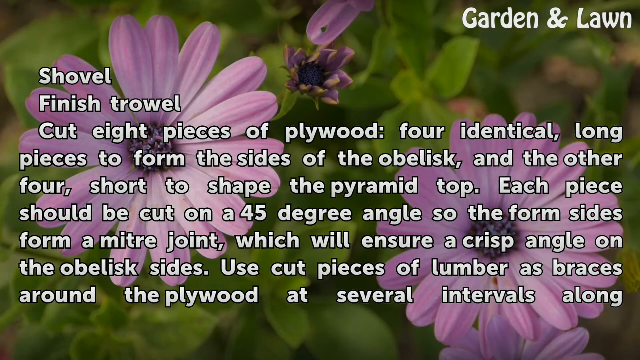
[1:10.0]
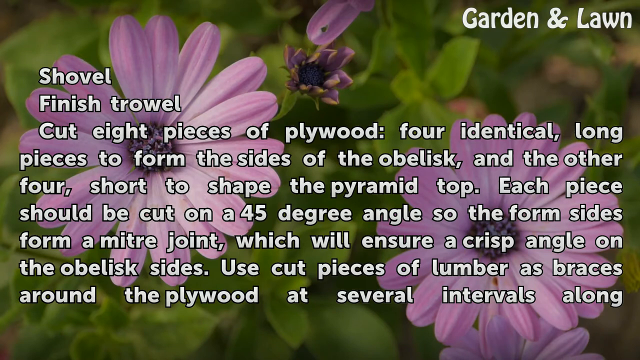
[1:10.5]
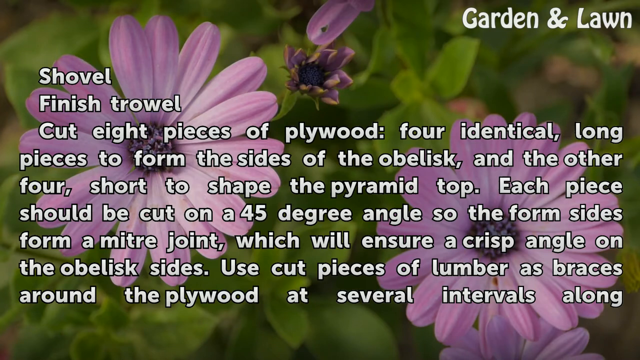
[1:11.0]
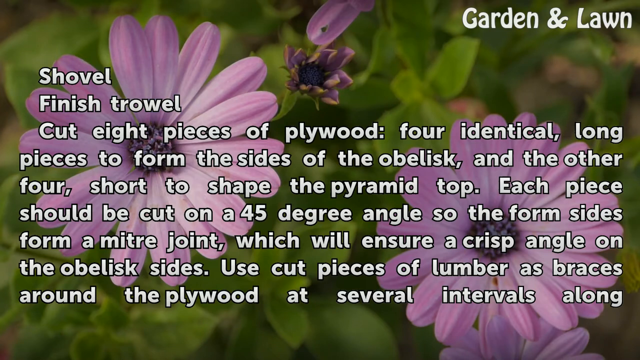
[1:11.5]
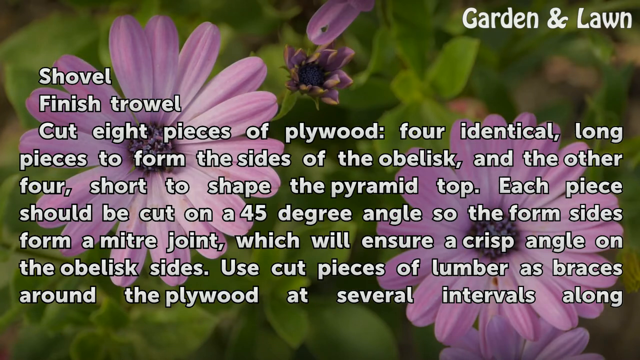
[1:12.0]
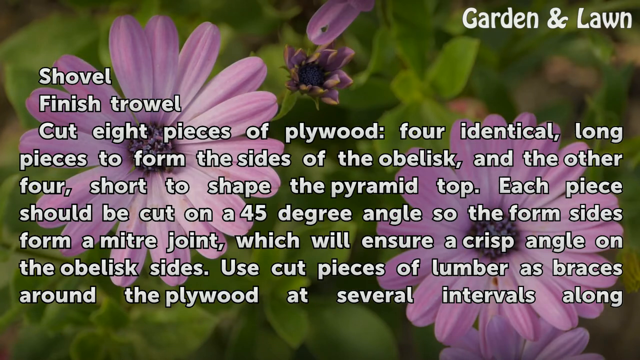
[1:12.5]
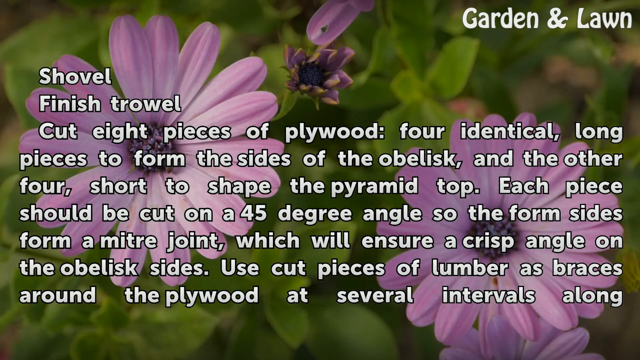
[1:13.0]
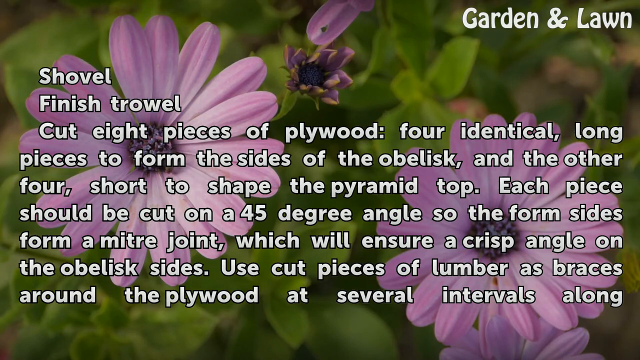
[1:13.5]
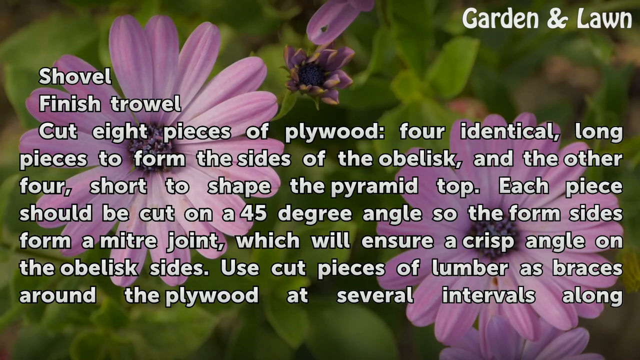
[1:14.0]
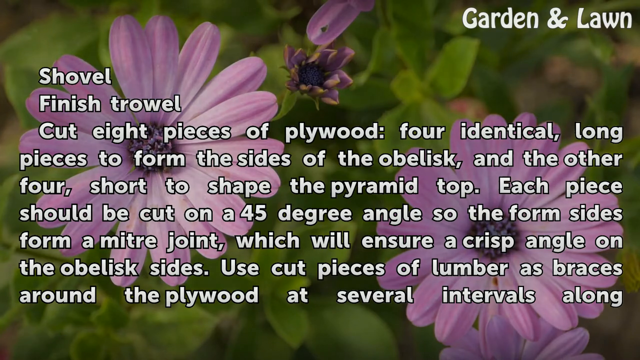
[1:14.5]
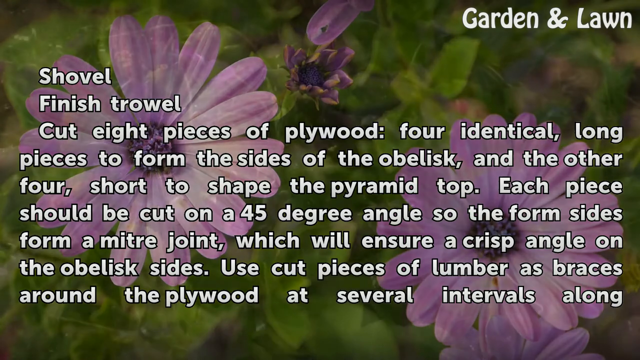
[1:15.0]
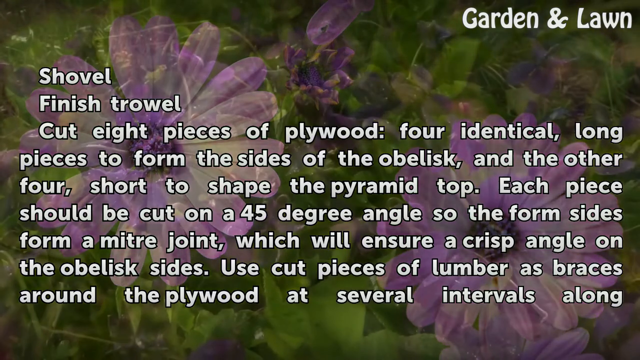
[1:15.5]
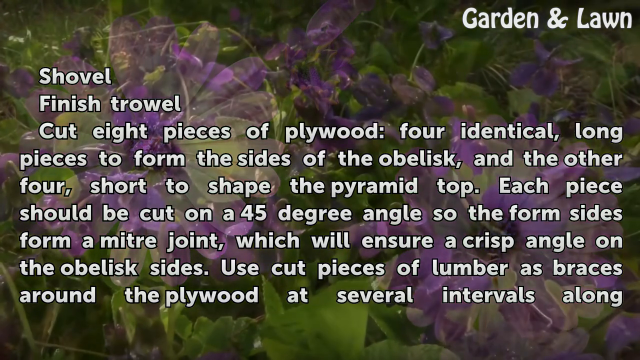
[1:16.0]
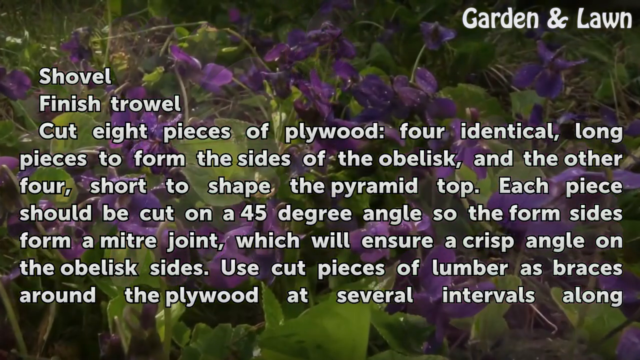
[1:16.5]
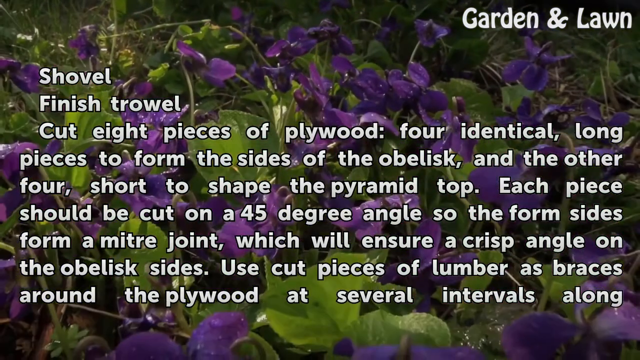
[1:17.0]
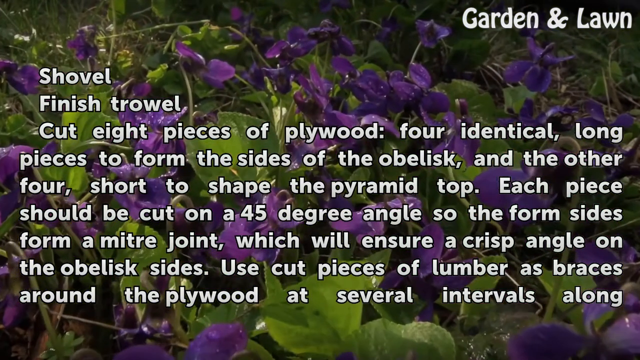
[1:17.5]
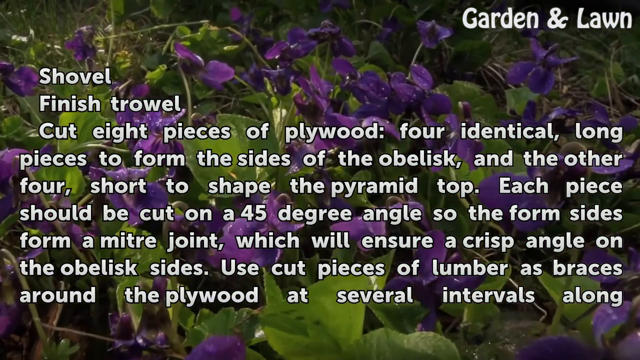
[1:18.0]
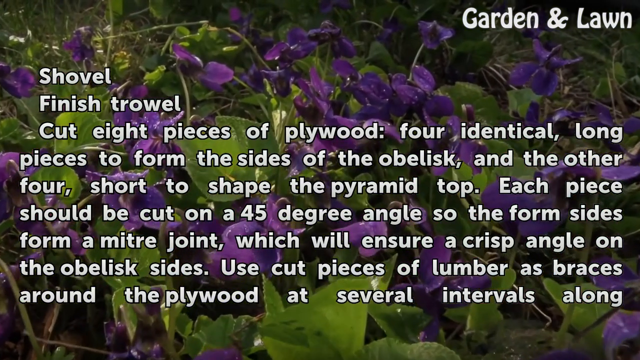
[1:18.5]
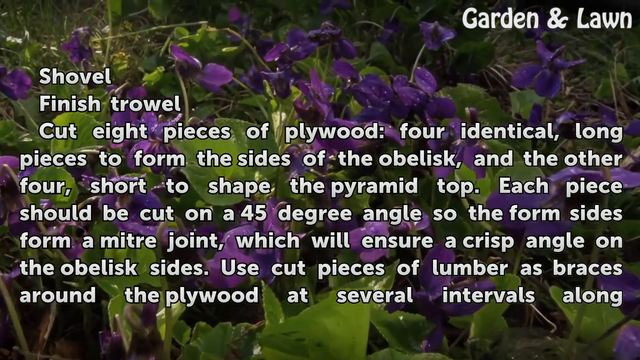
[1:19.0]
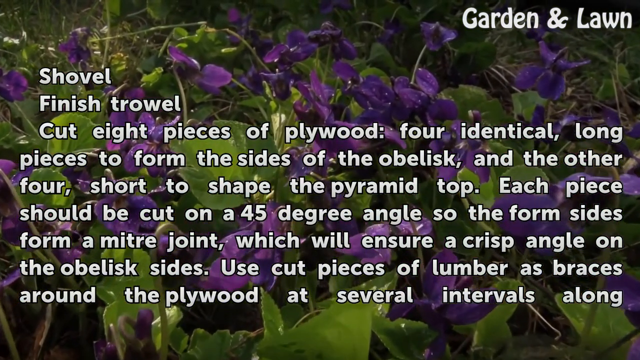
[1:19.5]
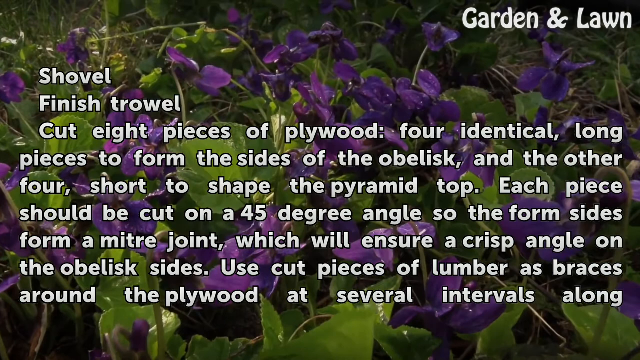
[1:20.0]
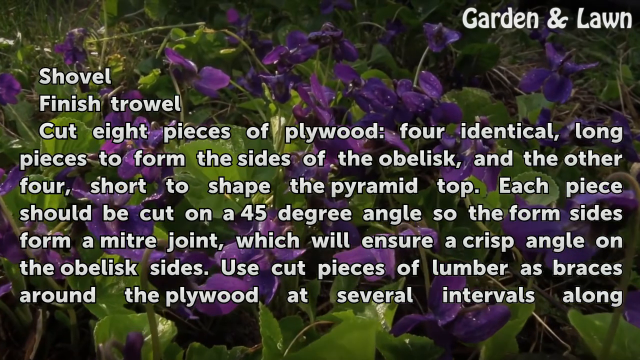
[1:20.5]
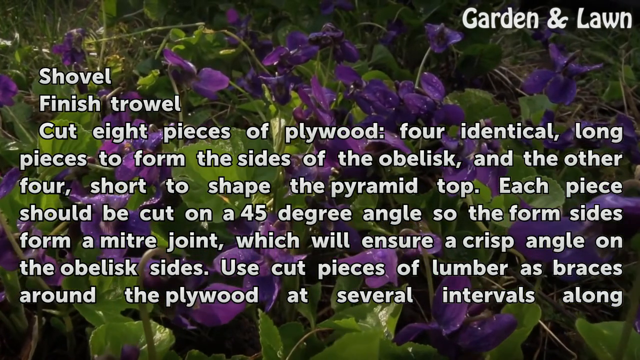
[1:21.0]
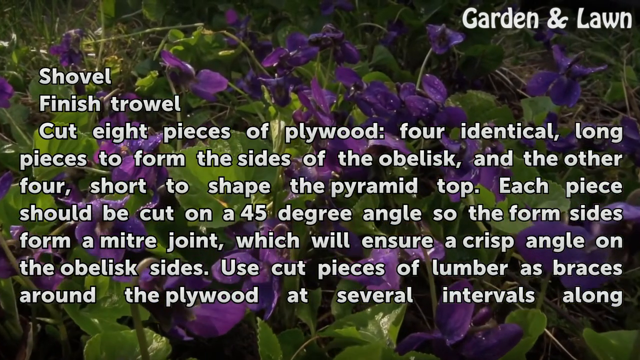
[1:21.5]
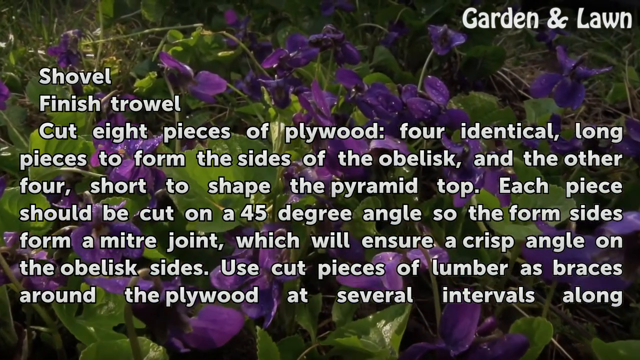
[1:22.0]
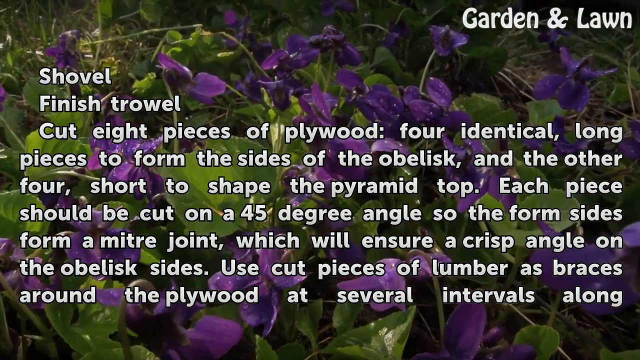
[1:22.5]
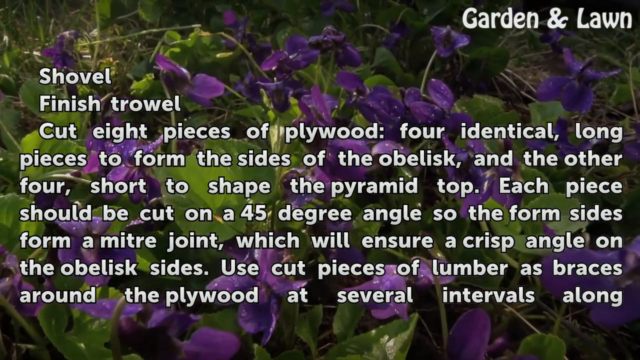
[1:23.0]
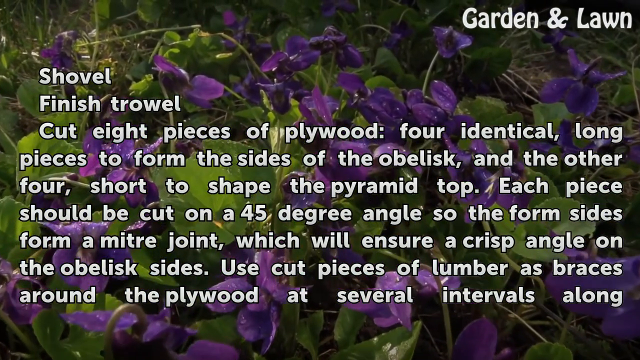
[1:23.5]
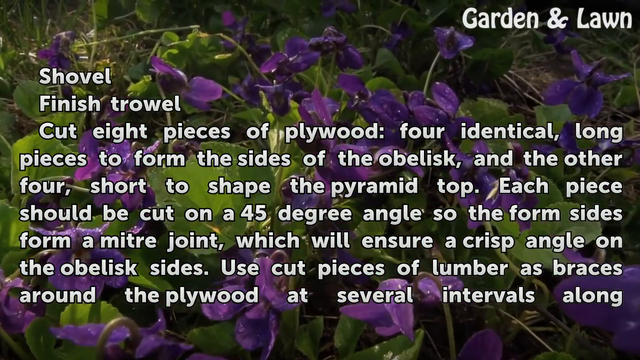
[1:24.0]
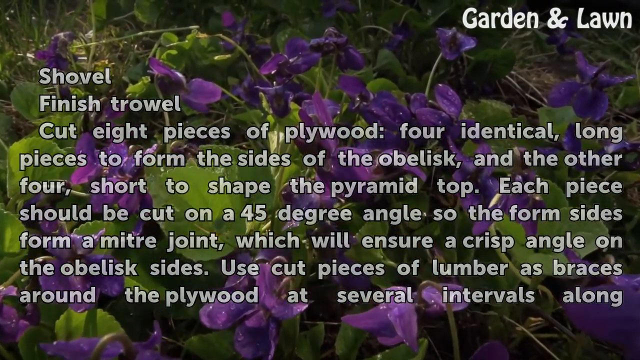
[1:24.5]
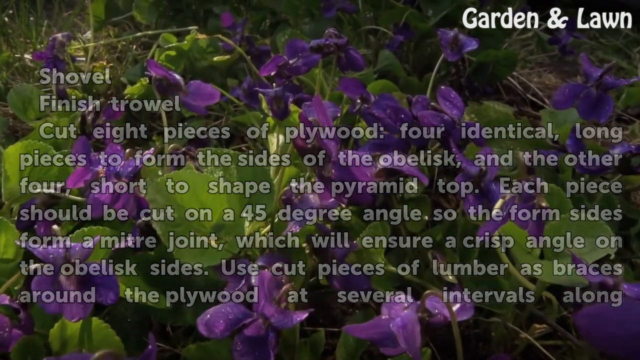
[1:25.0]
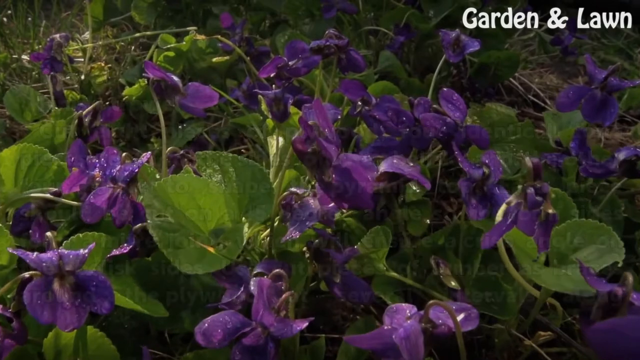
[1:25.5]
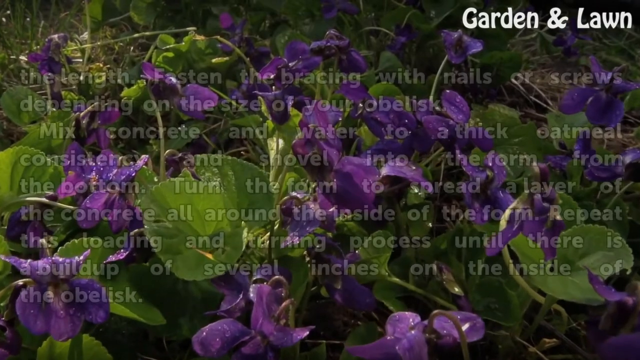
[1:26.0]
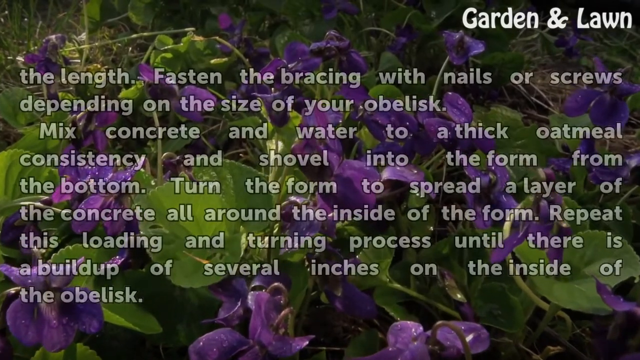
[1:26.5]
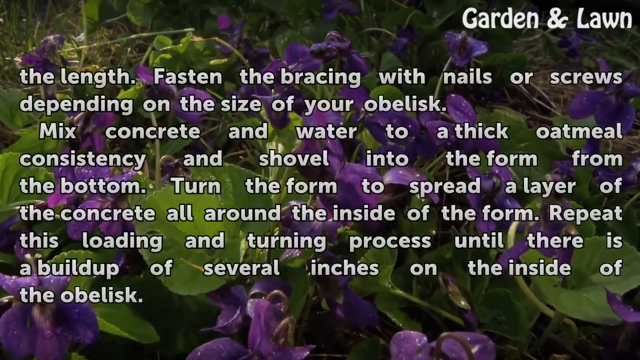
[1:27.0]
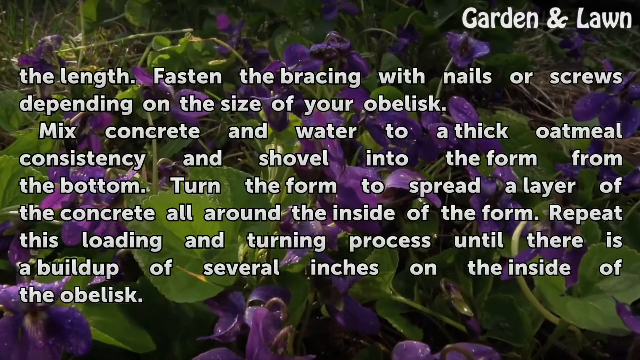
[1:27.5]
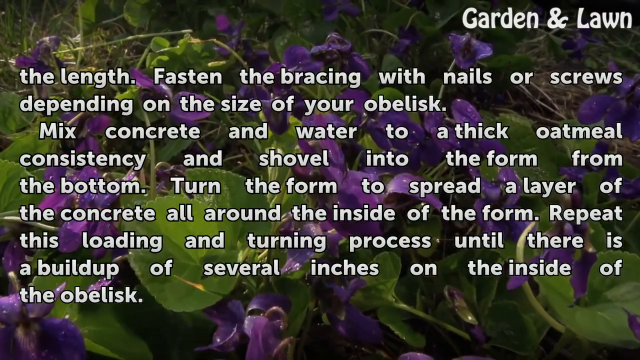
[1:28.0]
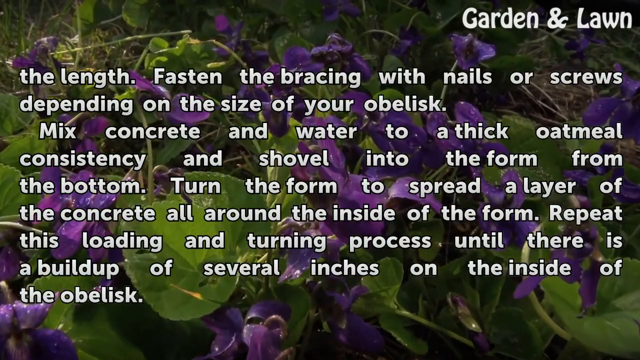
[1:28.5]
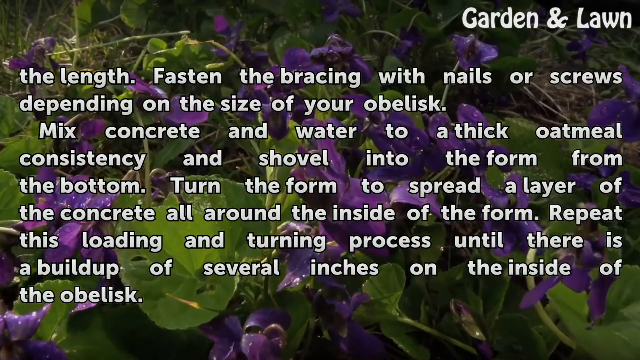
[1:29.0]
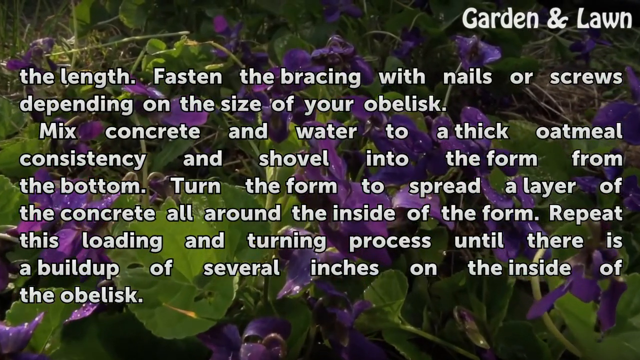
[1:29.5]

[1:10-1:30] Text appears over a background of plants: a moving, slightly panning camera view of green and purple foliage at ground level mixed with grass, as though hovering closely above the ground surface. The text "Garden and Lawn" is in the upper right corner. Centered text in white with a black outline reads "Shovel, finish trowel, cut eight pieces of plywood, four identical long pieces to form the sides of the obelisk, and the other four short to shape the pyramid top. Each piece should be cut on a 45 degree angle so the form sides form a miter joint, which will ensure a crisp angle on the obelisk sides. Use cut pieces of lumber as braces around the plywood at several intervals along the length." It continues: "Fasten the bracing with nails or screws, depending on the size of your obelisk. Mix concrete and water to a thick oatmeal consistency and shovel into the form from the bottom. Turn the form to spread a layer of the concrete all around the inside of the form. Repeat this loading and turning process until there is a buildup of several inches on the inside of the obelisk." The white text is superimposed over the slowly panning background of green and purple foliage mixed with grass.